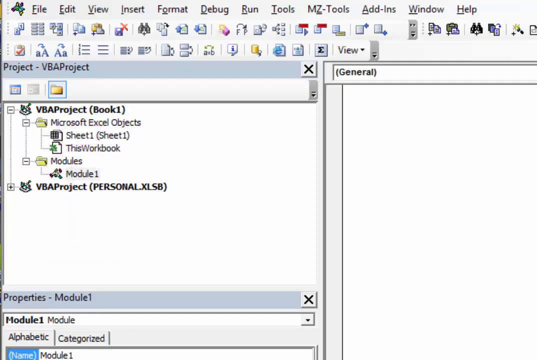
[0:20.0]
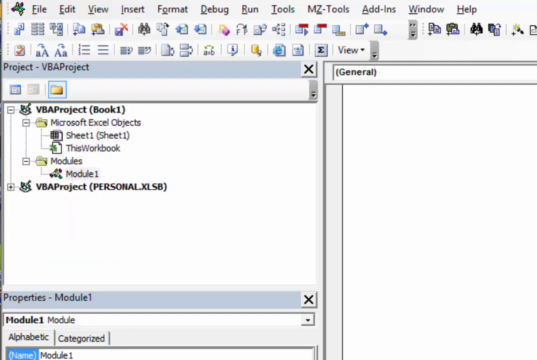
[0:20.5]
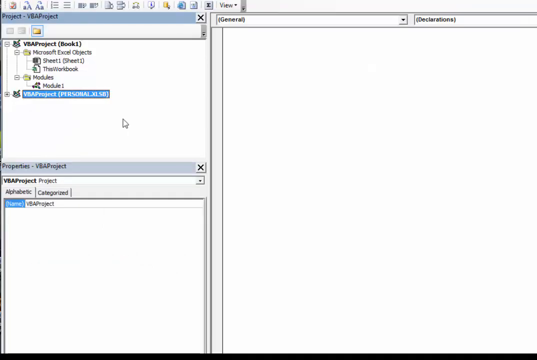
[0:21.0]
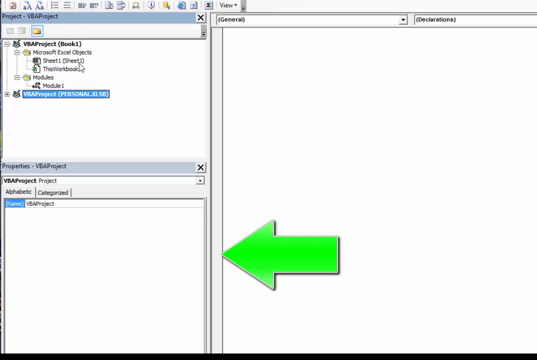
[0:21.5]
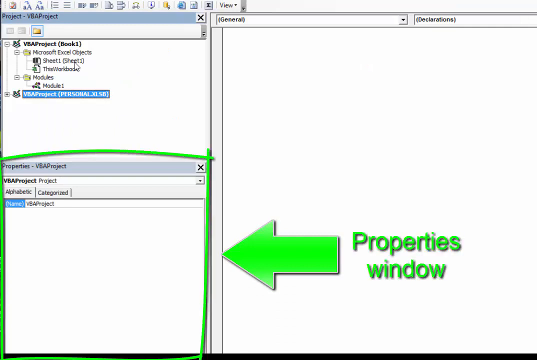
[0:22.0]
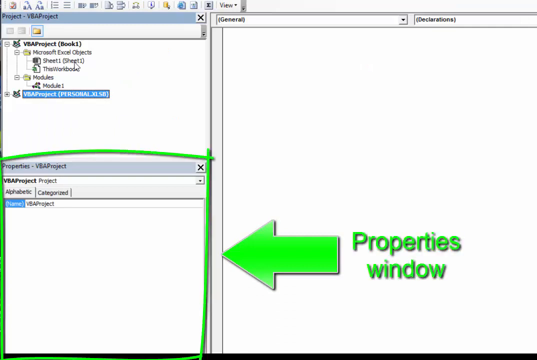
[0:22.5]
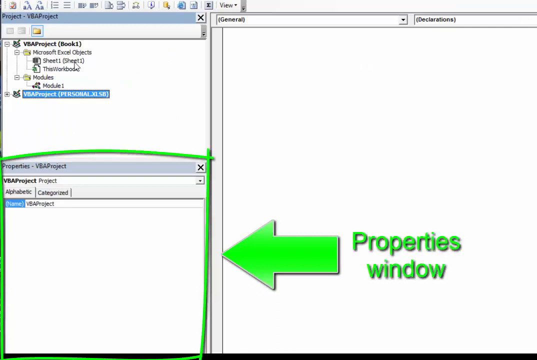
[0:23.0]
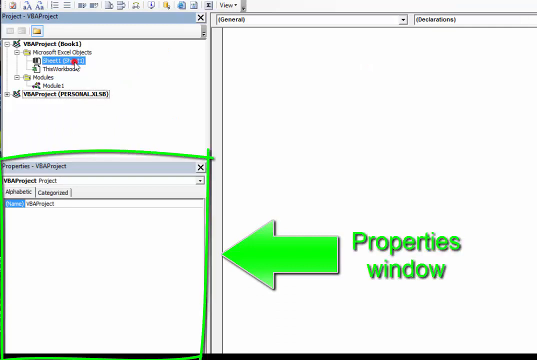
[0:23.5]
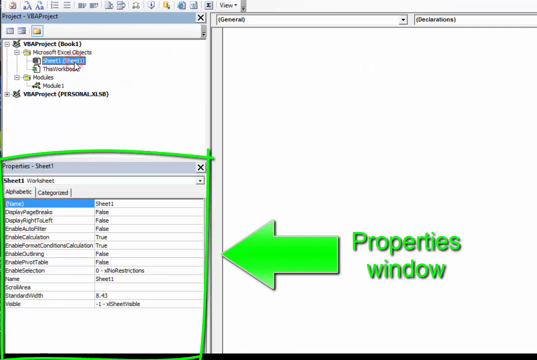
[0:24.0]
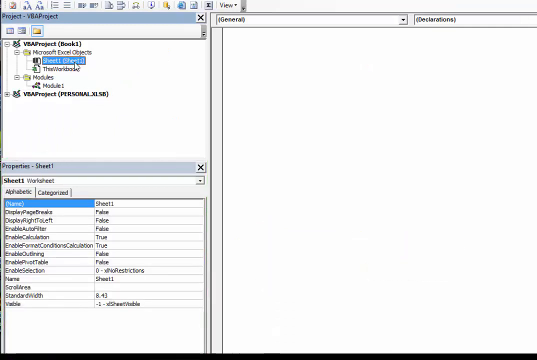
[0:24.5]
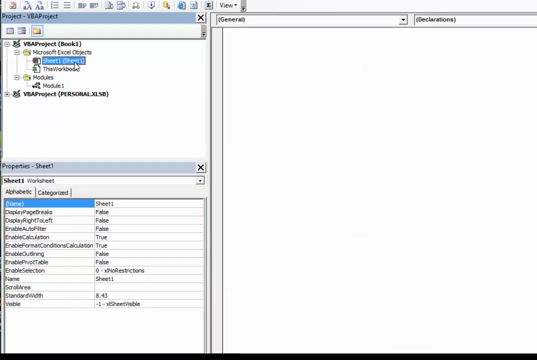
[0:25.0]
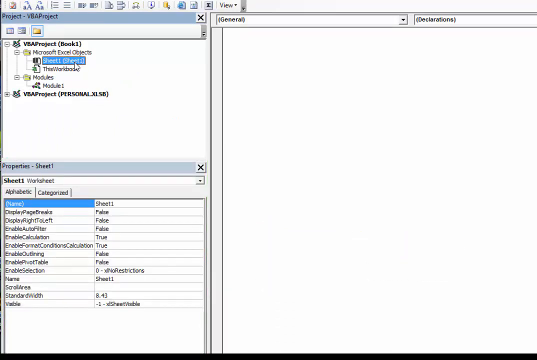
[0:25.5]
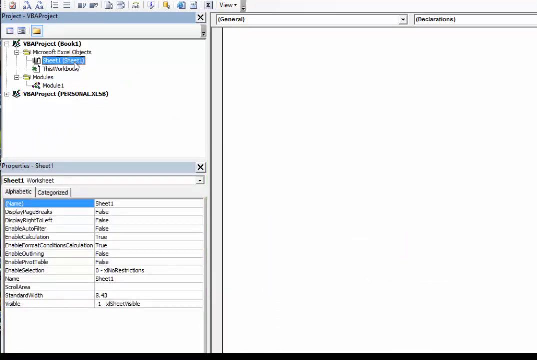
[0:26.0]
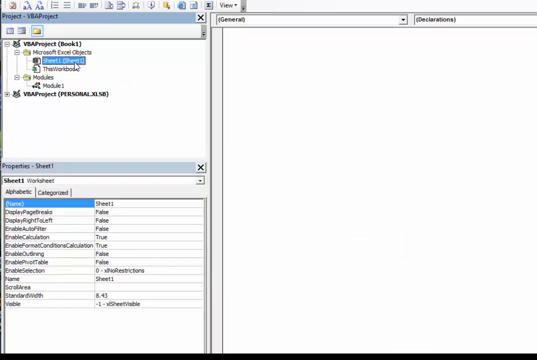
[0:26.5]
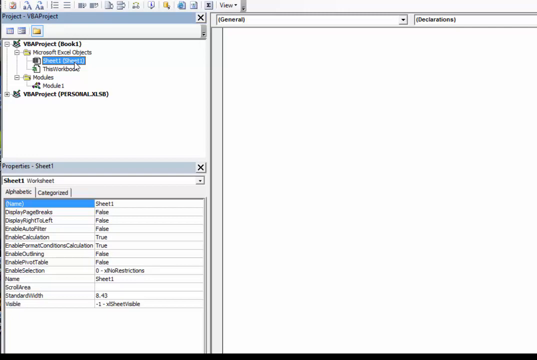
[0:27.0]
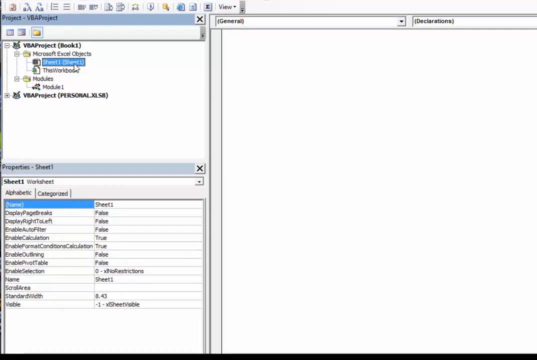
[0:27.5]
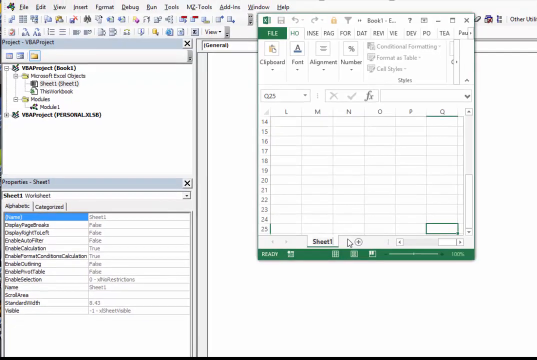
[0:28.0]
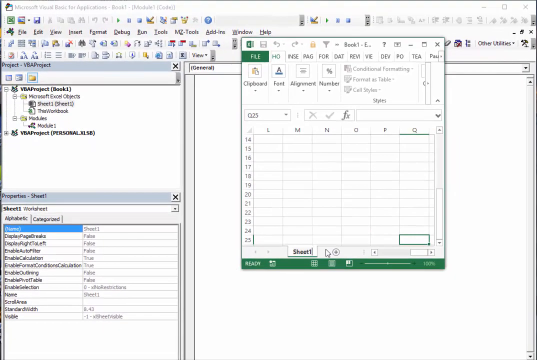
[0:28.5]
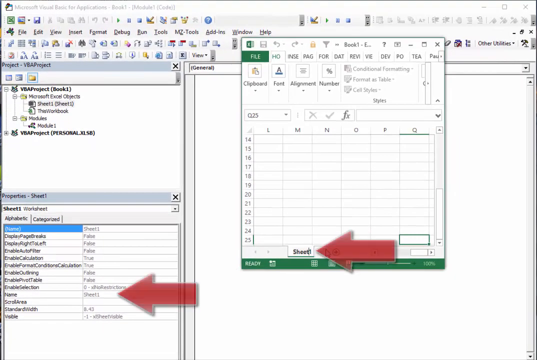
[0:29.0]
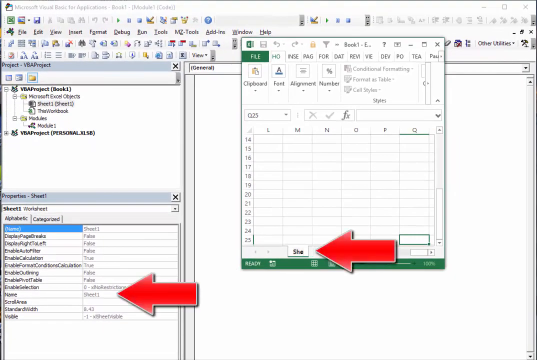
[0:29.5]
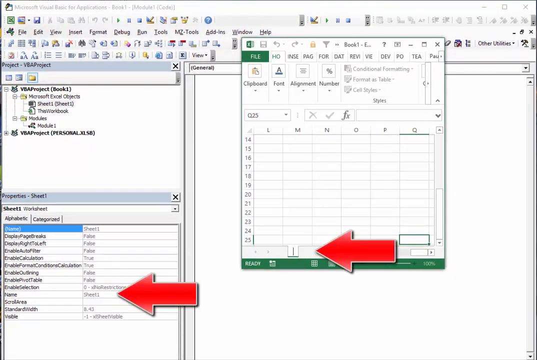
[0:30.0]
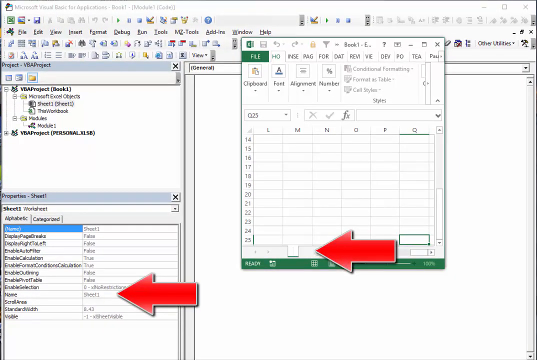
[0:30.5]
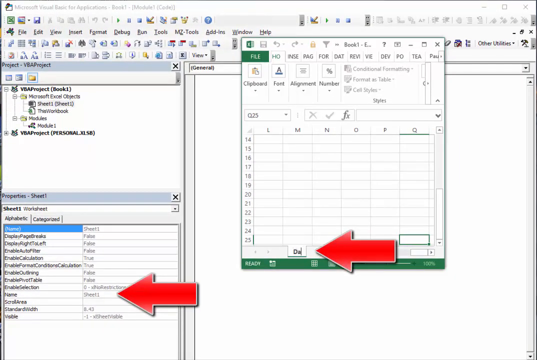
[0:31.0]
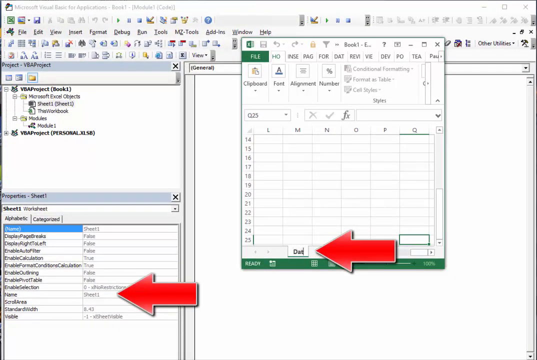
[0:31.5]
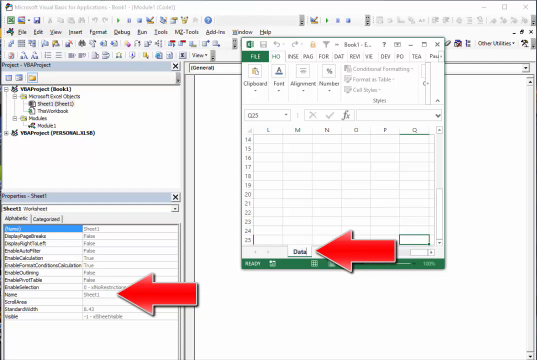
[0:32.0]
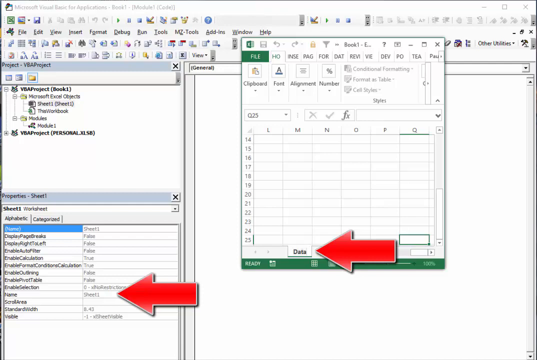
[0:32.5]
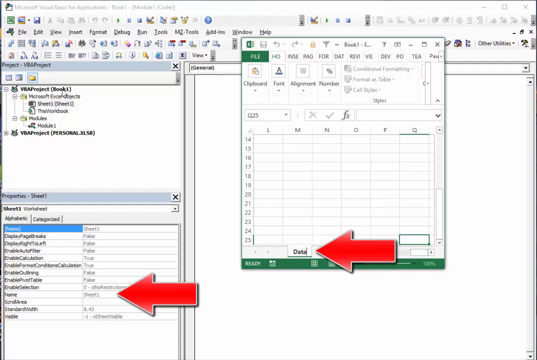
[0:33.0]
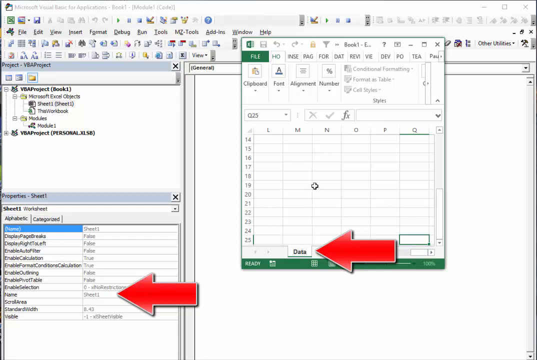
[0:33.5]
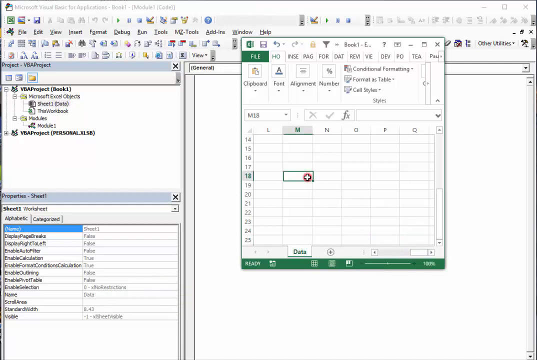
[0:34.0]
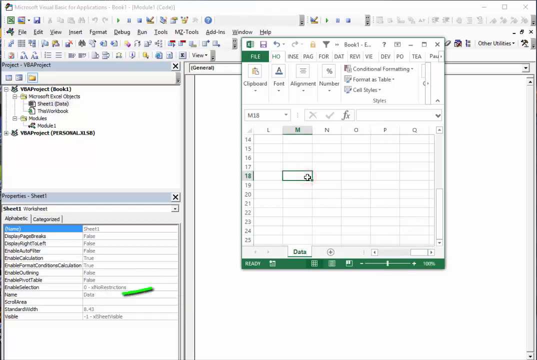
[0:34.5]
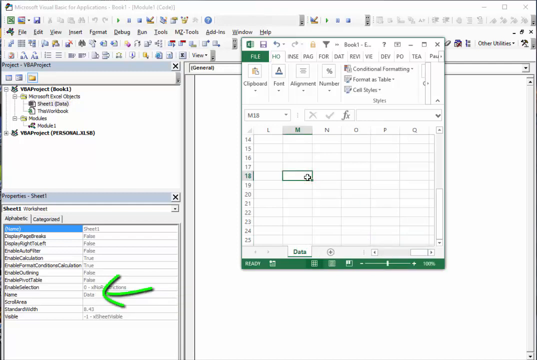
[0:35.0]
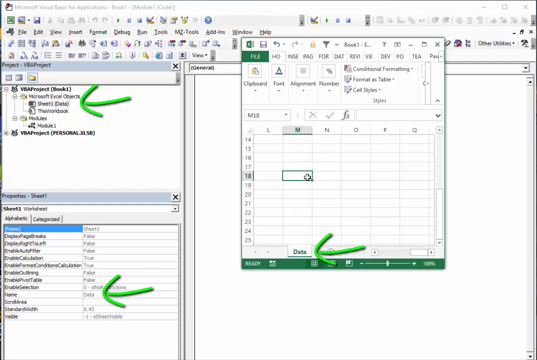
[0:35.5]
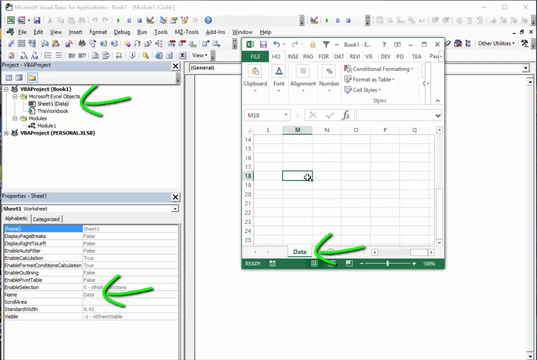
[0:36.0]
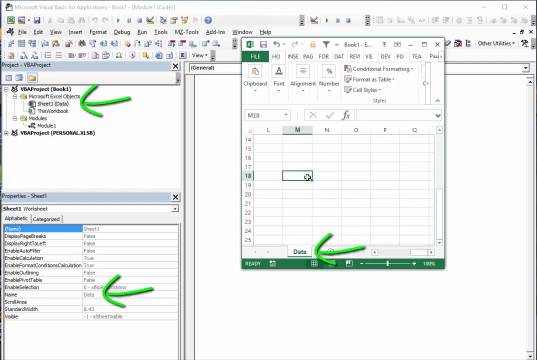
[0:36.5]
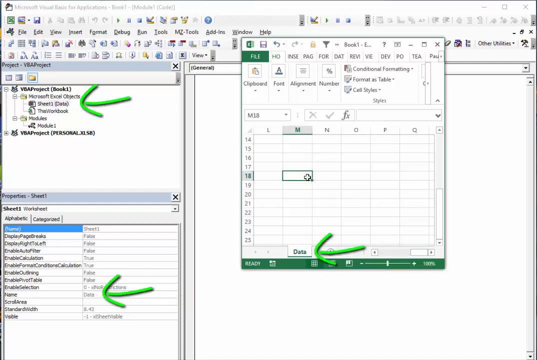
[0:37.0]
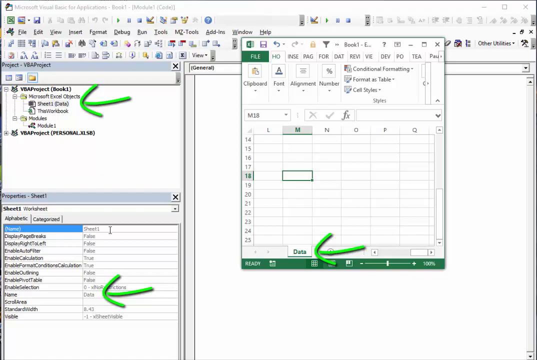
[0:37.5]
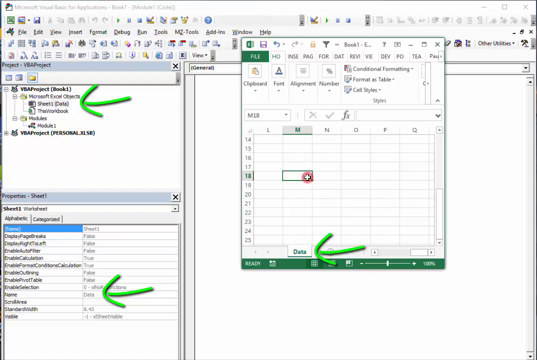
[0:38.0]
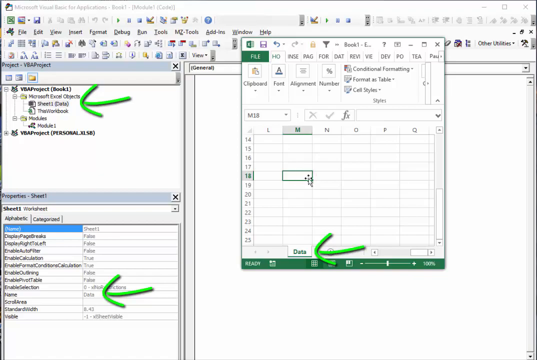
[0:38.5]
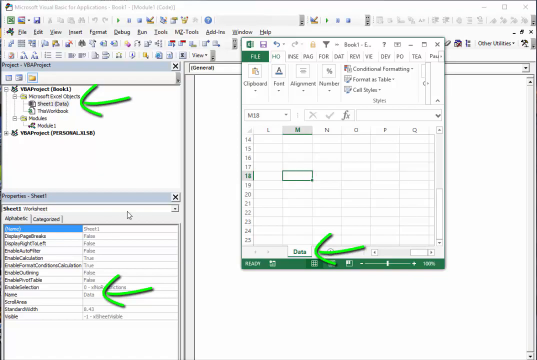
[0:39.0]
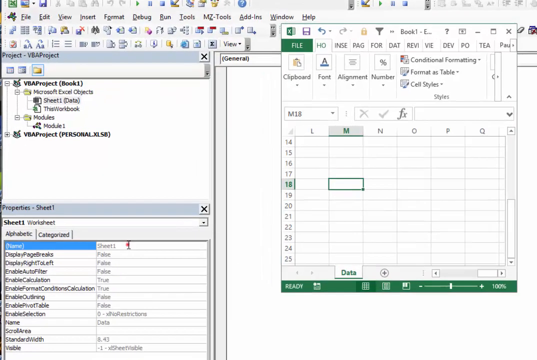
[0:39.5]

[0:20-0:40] A properties window shows the Sheet1 work area. The name of Sheet1 is edited to "data," so the sheet is now named data instead of Sheet1.